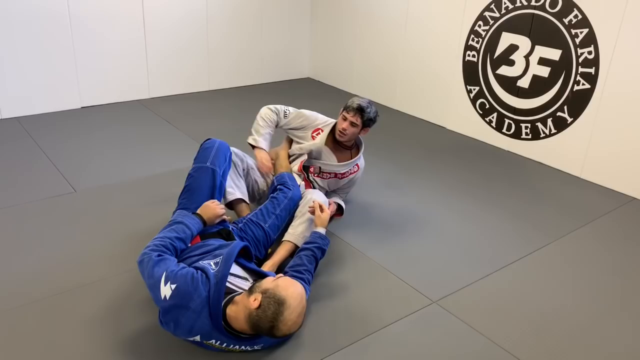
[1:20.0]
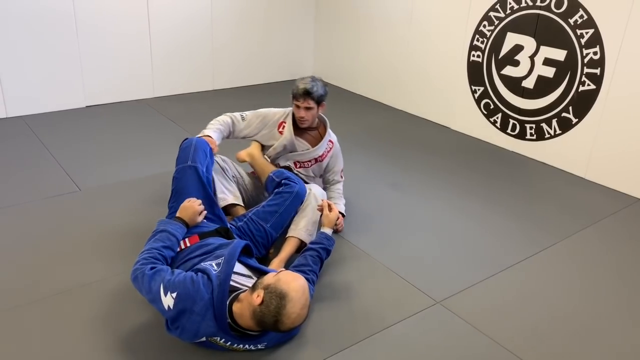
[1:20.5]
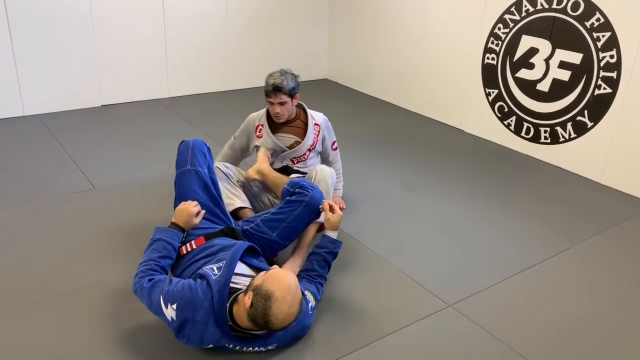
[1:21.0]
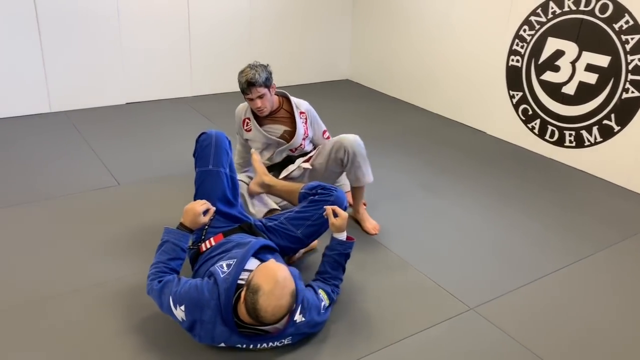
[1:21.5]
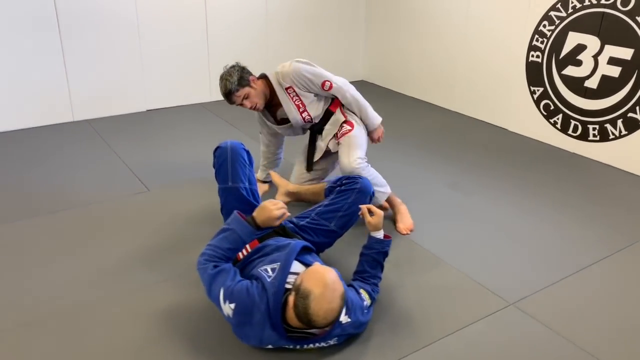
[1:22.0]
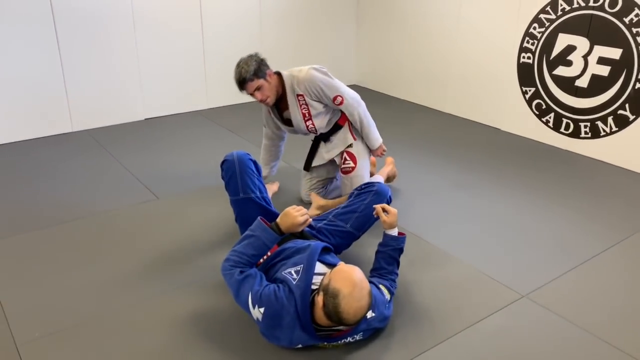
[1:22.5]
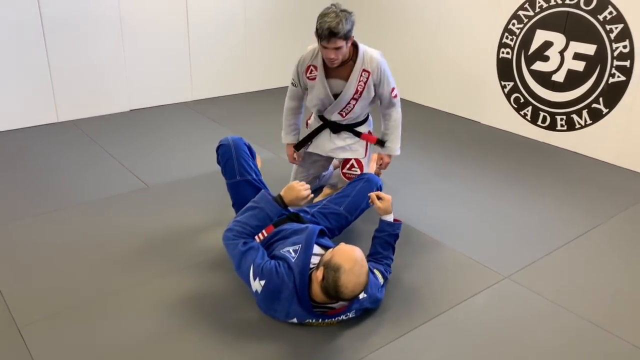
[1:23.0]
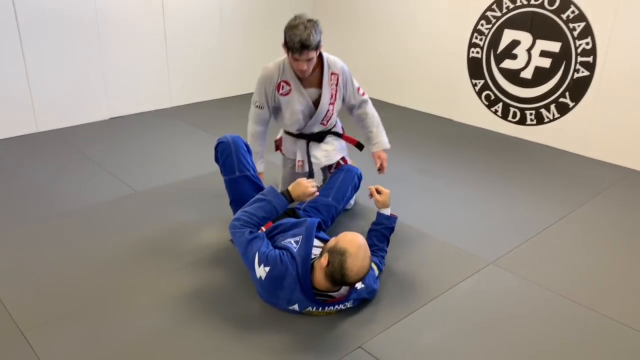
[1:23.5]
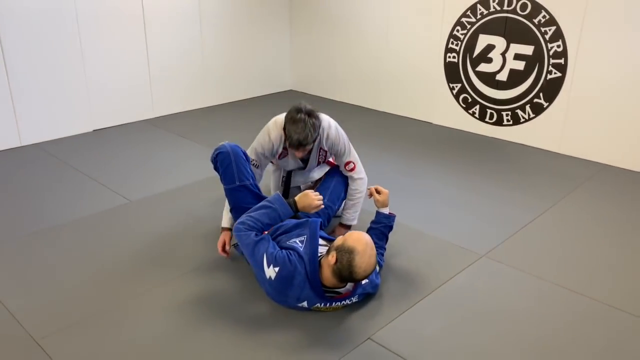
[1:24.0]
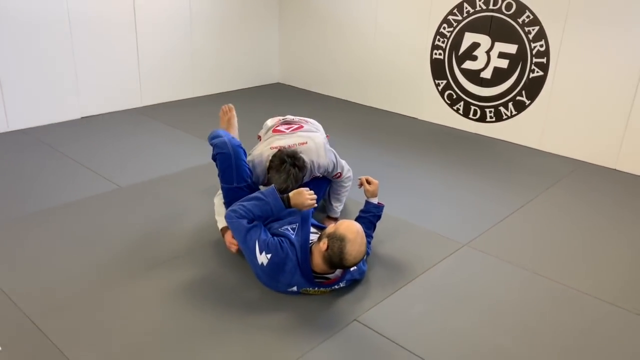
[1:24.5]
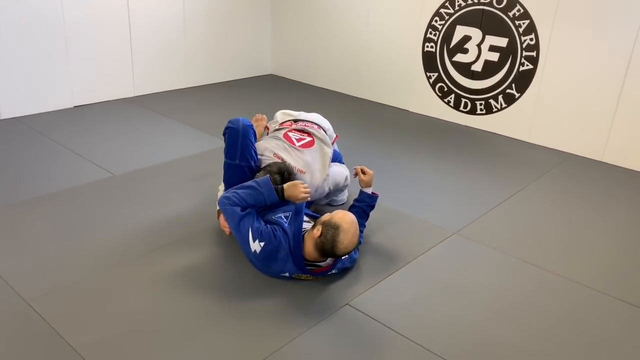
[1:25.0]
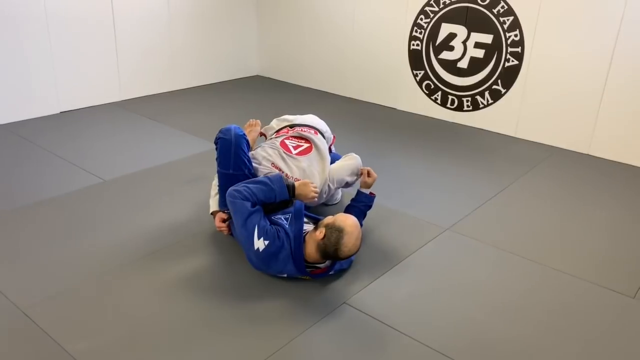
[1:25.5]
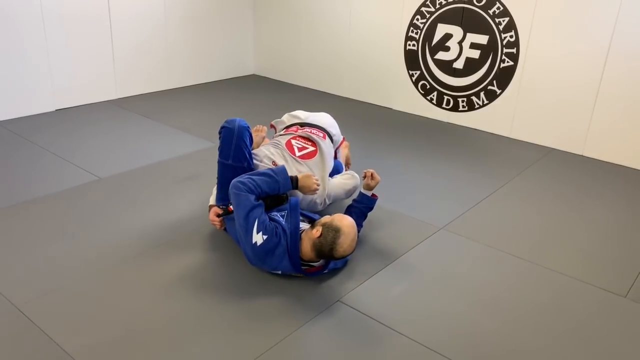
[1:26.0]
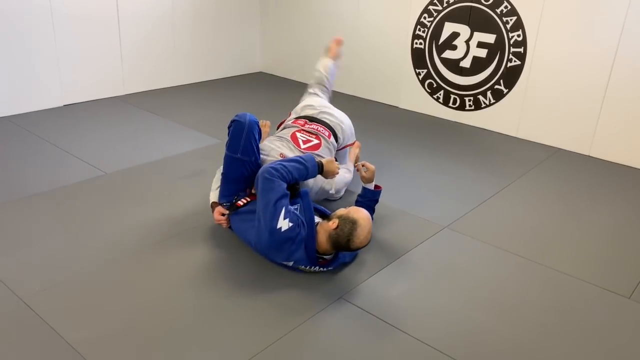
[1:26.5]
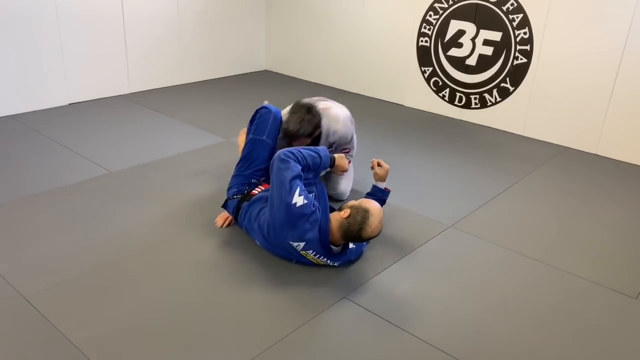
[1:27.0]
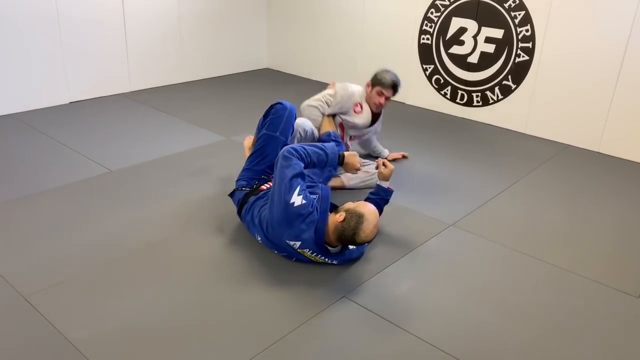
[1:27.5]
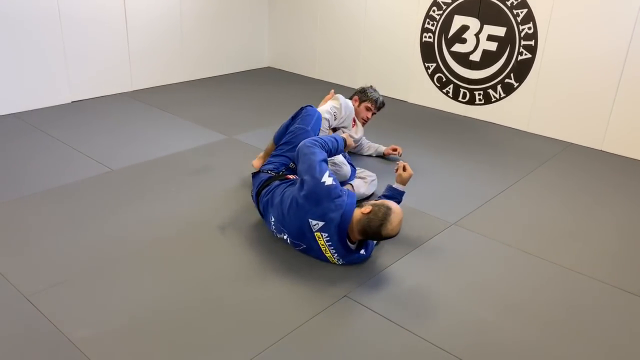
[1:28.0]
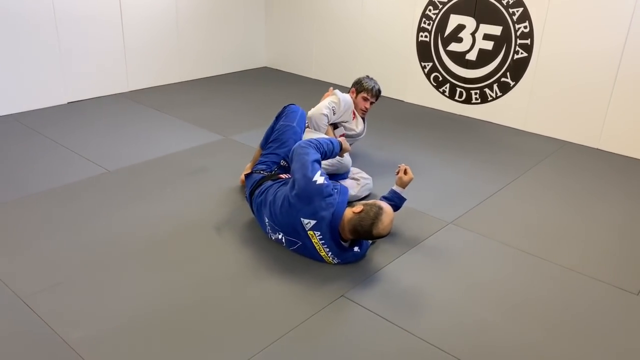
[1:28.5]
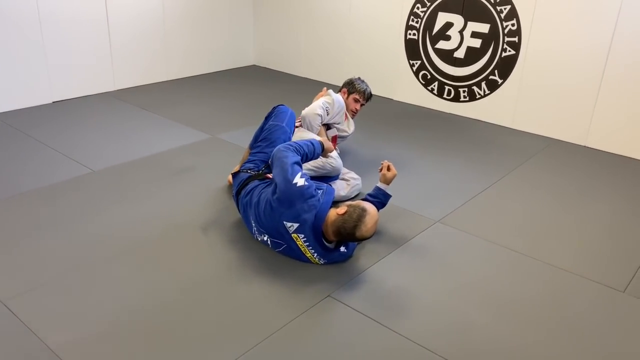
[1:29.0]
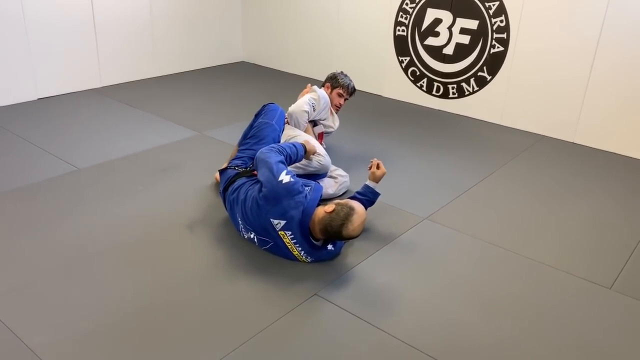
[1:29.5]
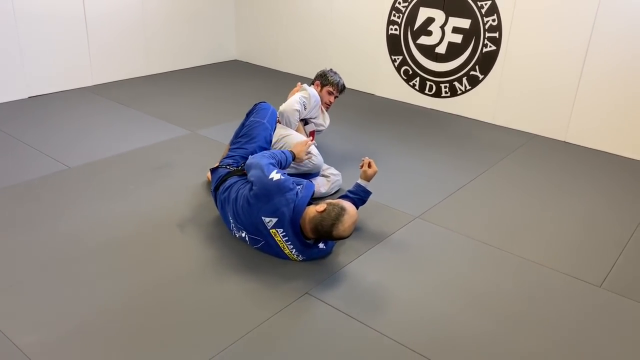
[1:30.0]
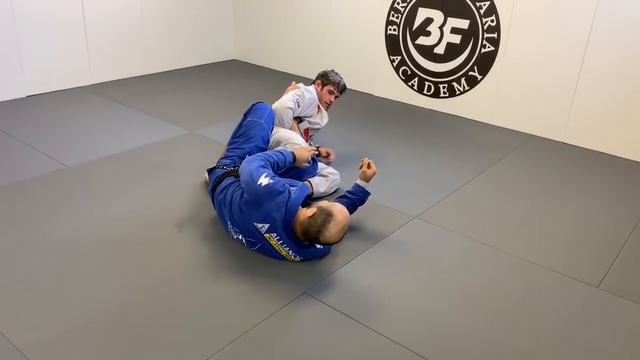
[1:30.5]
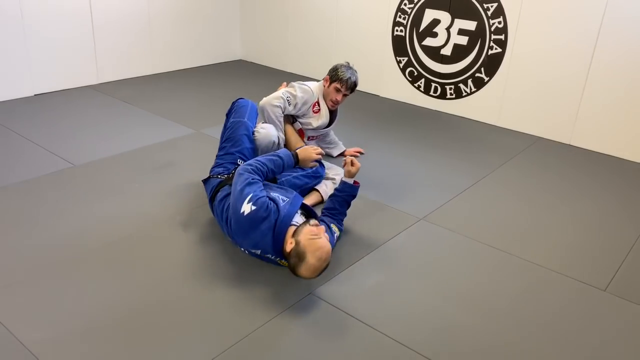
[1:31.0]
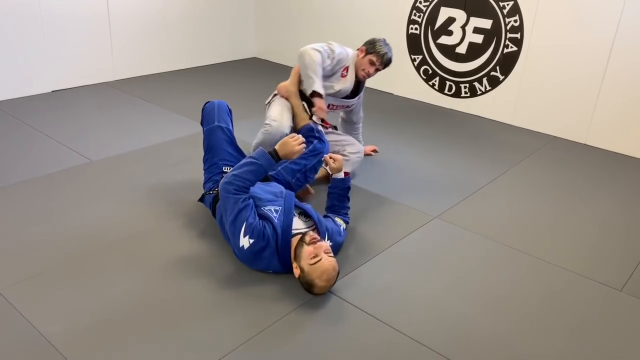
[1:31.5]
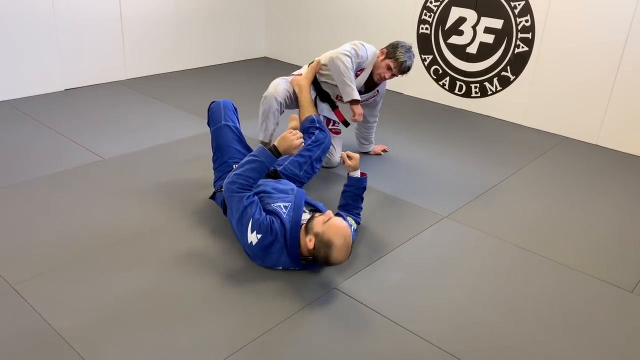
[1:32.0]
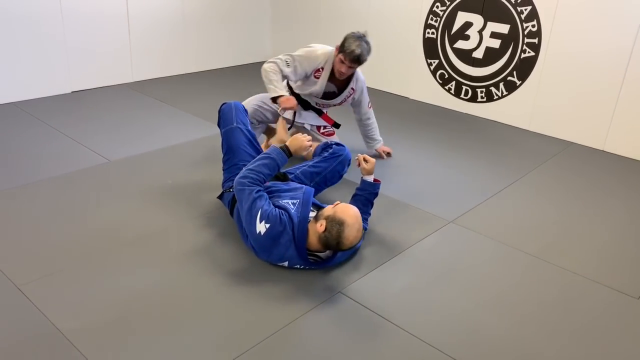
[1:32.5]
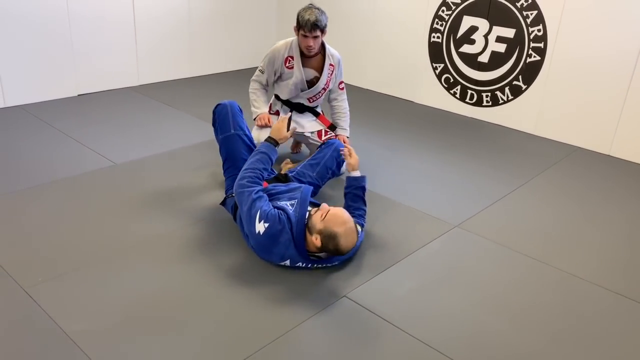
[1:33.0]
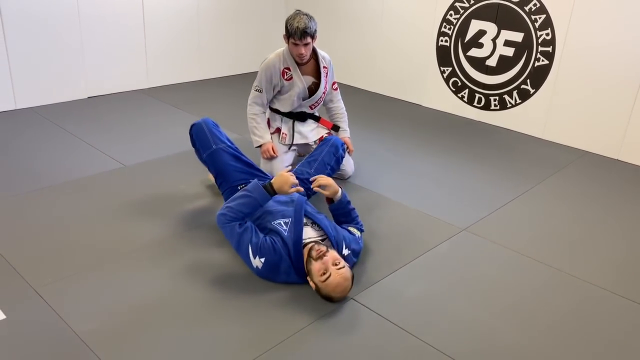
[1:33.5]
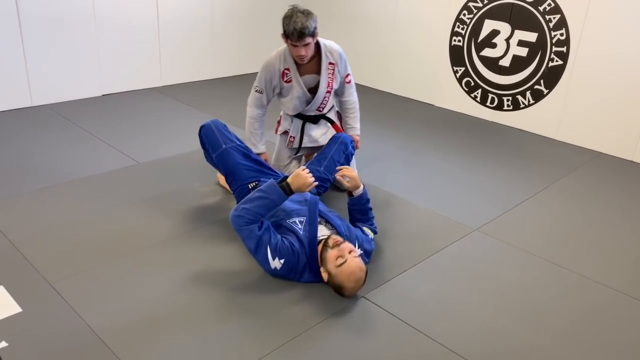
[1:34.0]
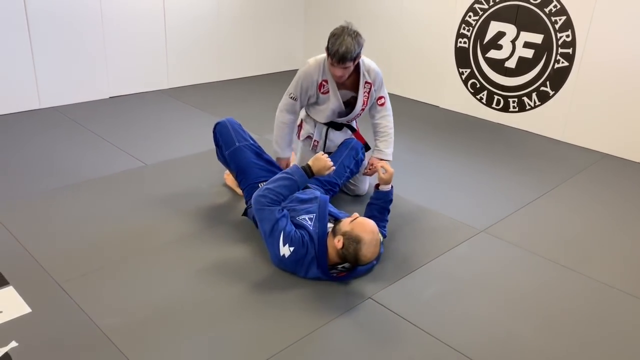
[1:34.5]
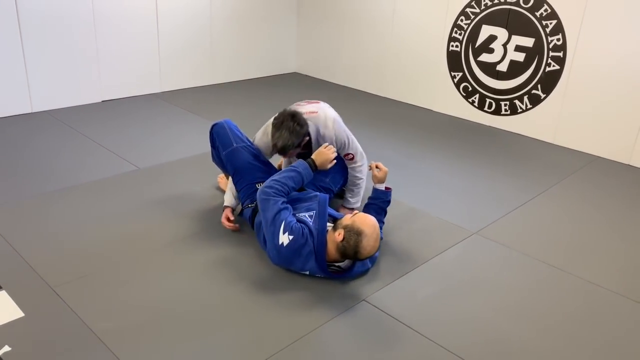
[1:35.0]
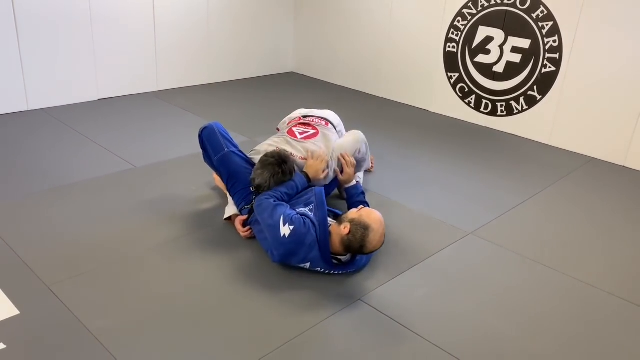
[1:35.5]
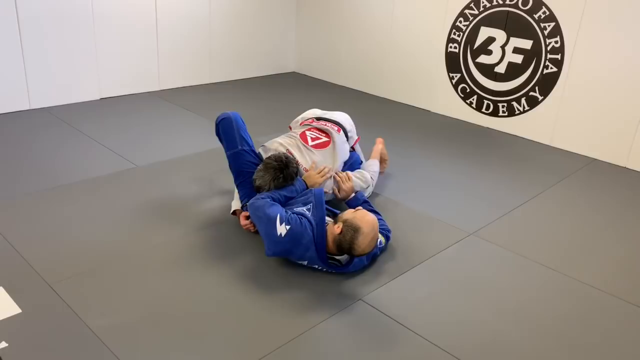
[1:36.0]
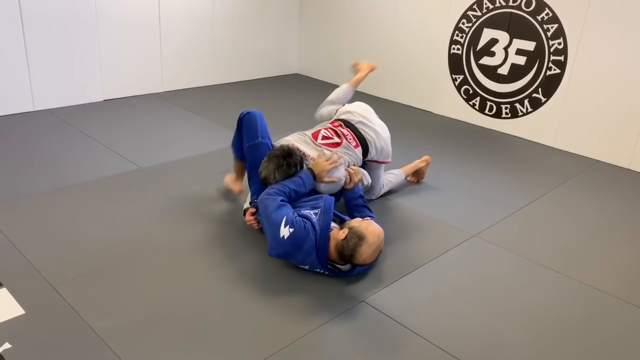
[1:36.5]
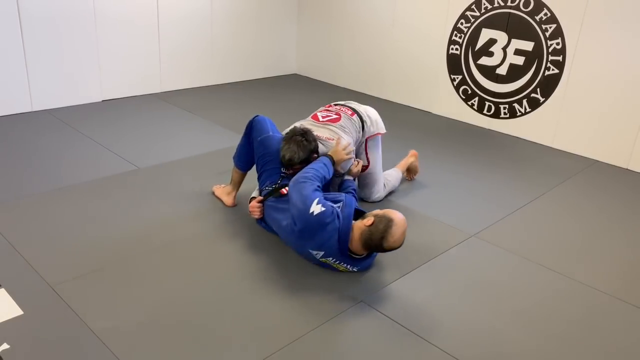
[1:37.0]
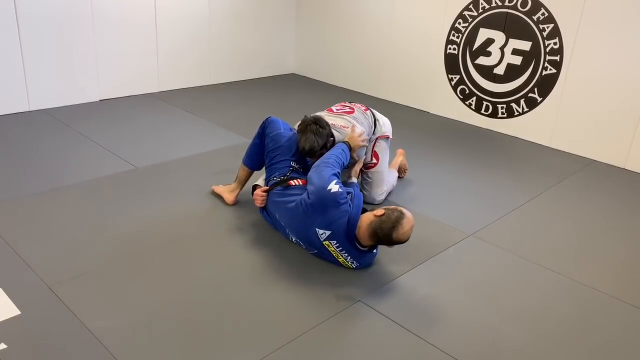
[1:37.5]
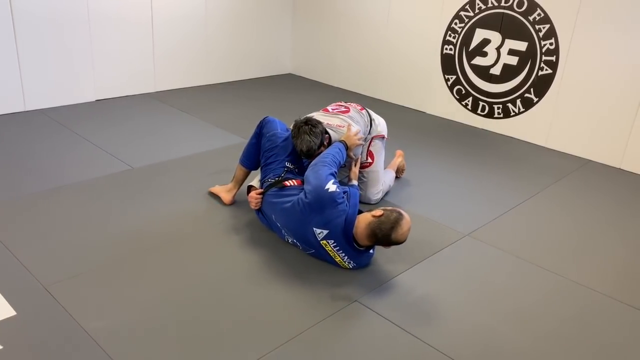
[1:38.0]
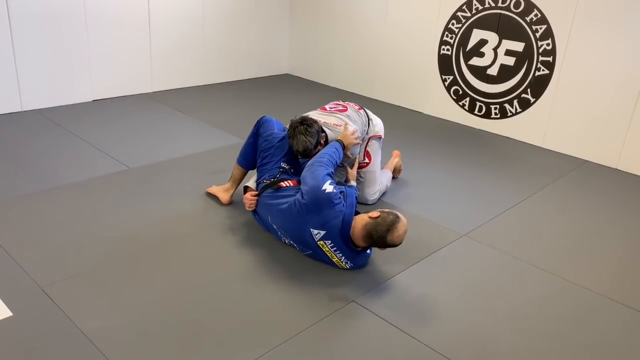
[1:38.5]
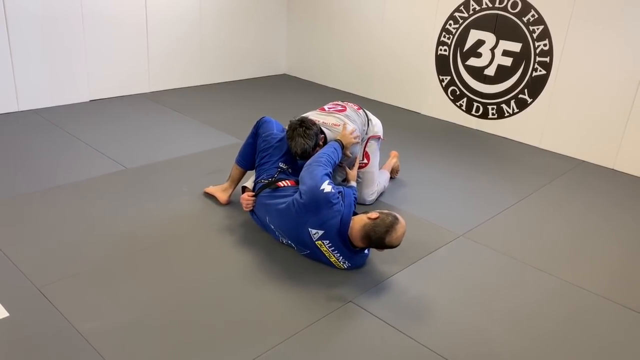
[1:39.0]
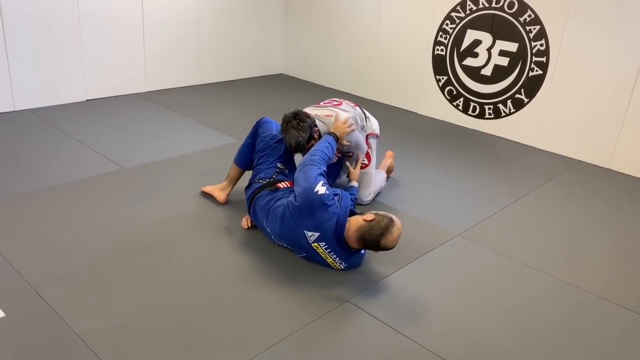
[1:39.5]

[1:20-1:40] They are still on the gray mats. After jumping back, the man gets up onto both knees, between the other man's legs, and bends the leg back, doing the move faster than before, when he did it slowly. He then appears to turn as if to do it again, and the other person seems to block. They talk, and it looks like he is about to do the move again, but he does not.